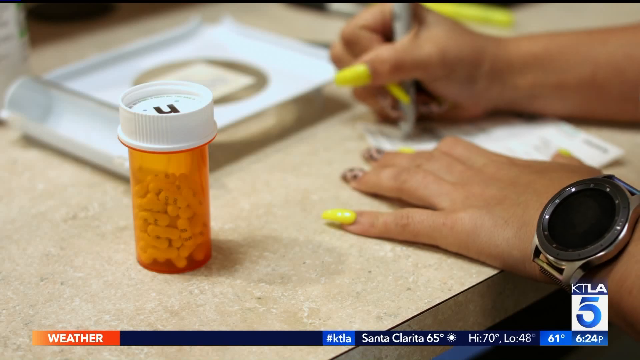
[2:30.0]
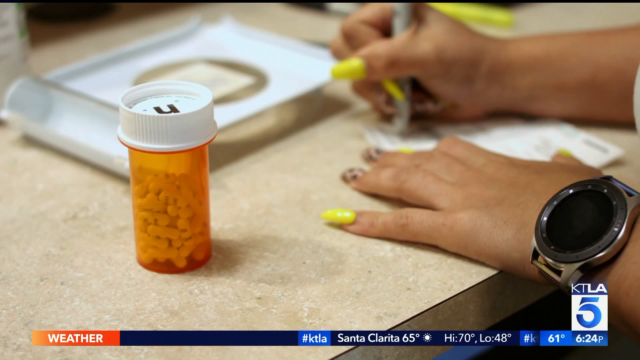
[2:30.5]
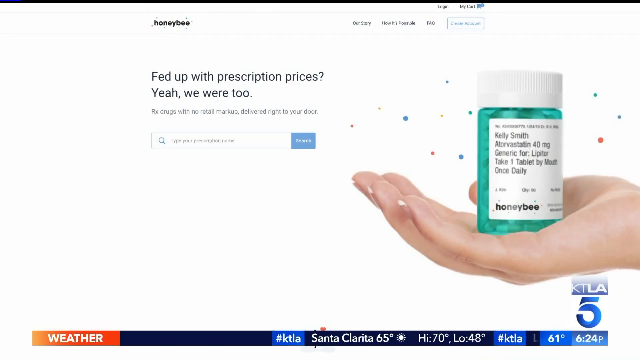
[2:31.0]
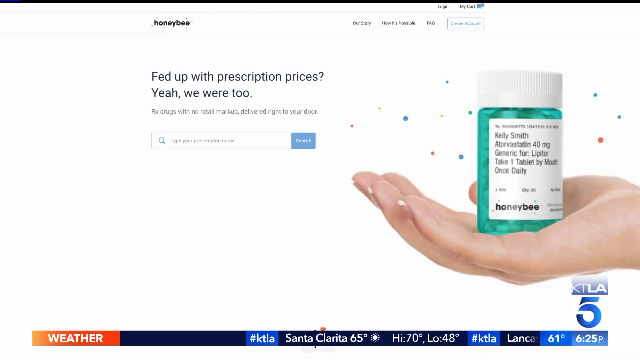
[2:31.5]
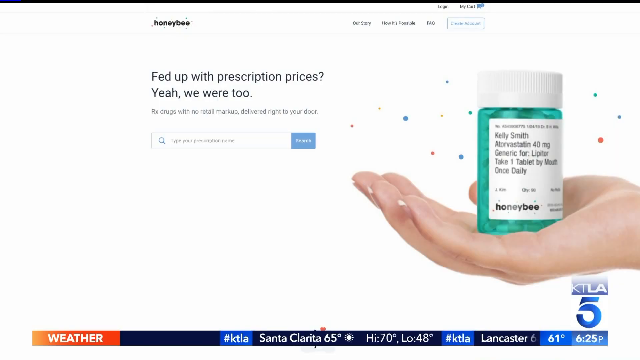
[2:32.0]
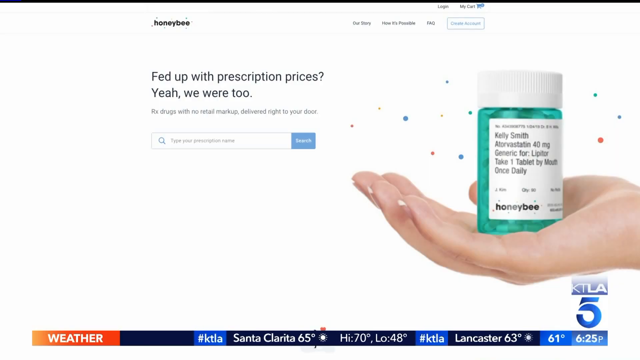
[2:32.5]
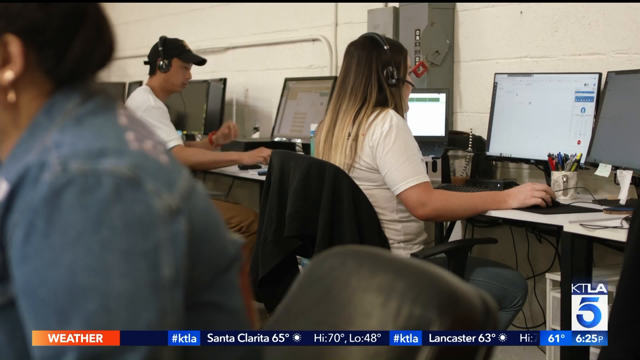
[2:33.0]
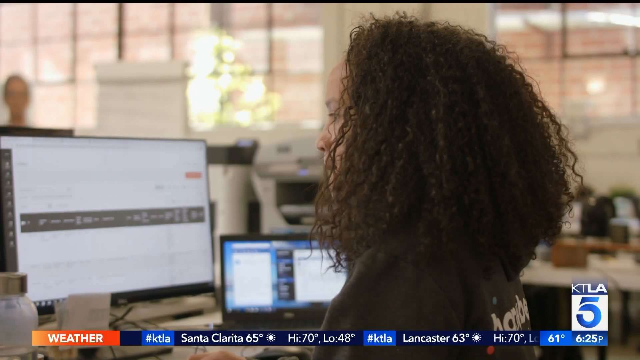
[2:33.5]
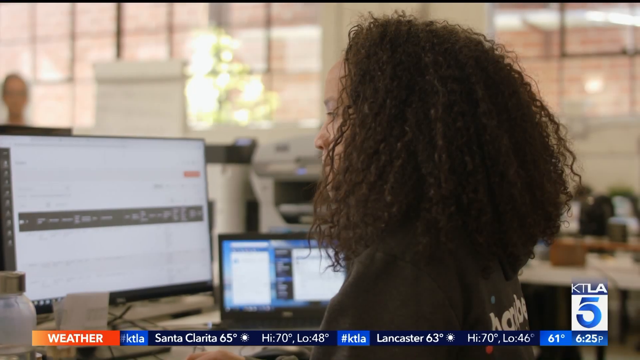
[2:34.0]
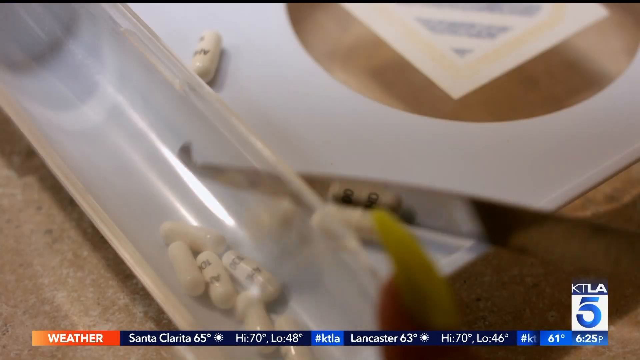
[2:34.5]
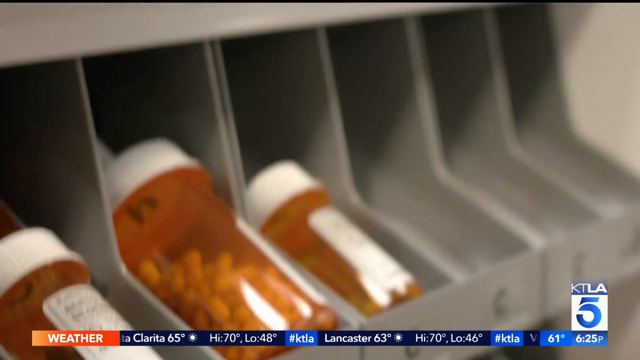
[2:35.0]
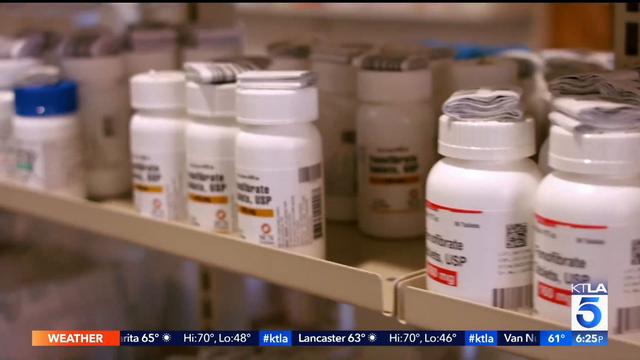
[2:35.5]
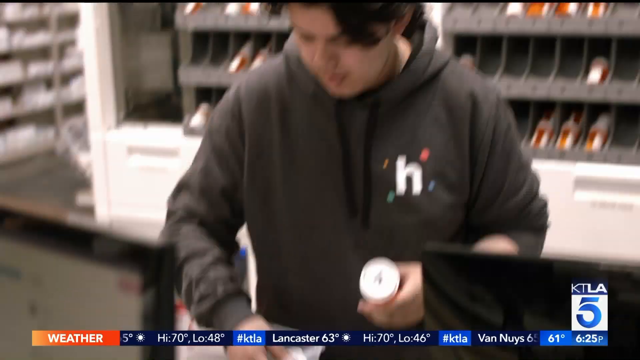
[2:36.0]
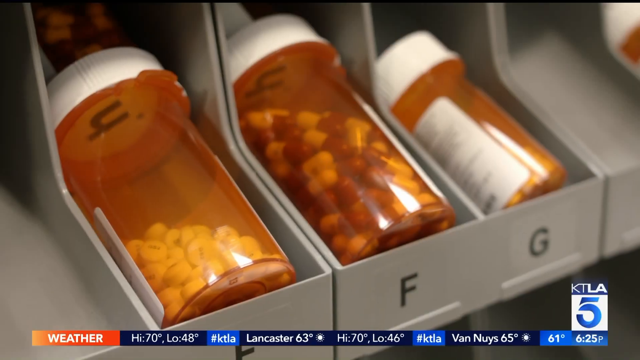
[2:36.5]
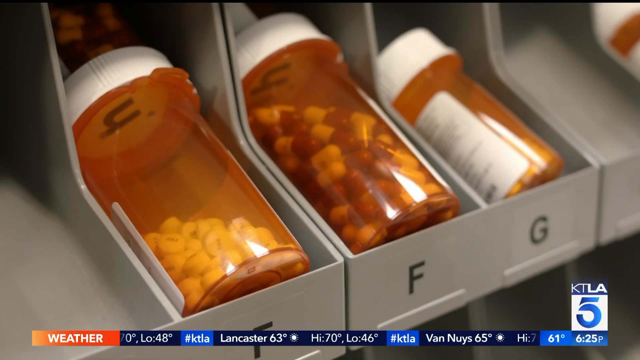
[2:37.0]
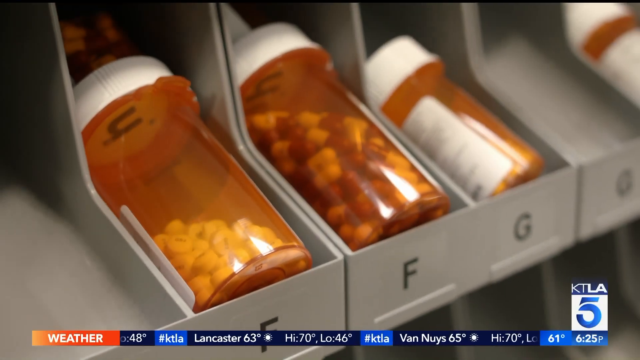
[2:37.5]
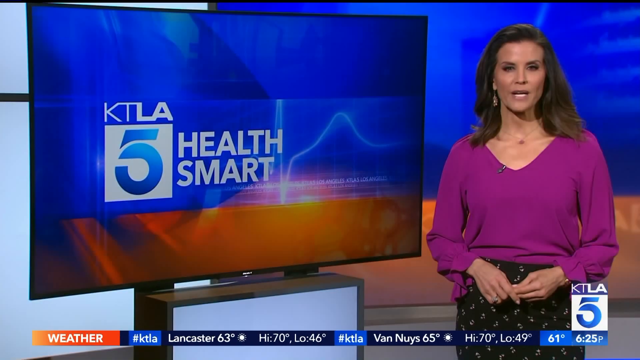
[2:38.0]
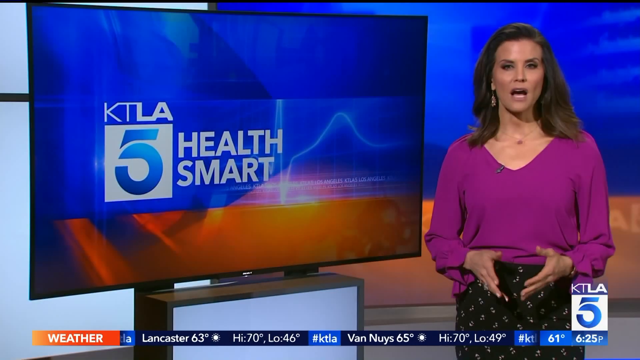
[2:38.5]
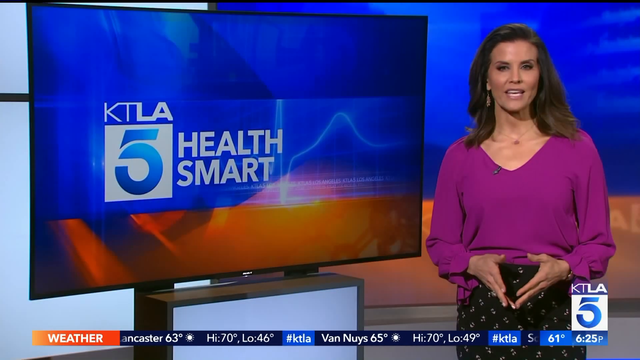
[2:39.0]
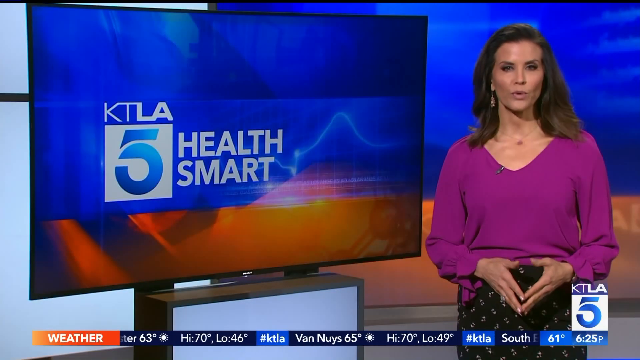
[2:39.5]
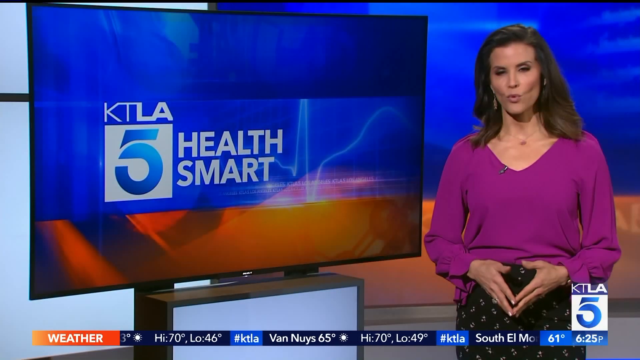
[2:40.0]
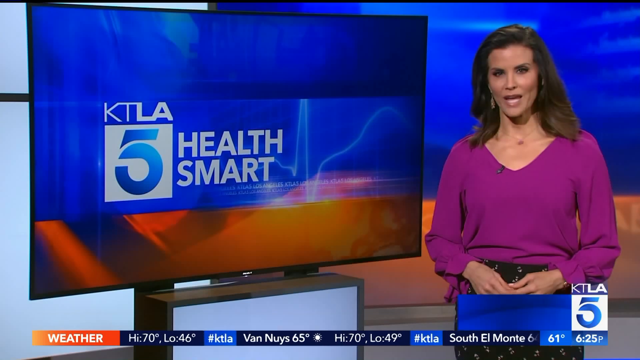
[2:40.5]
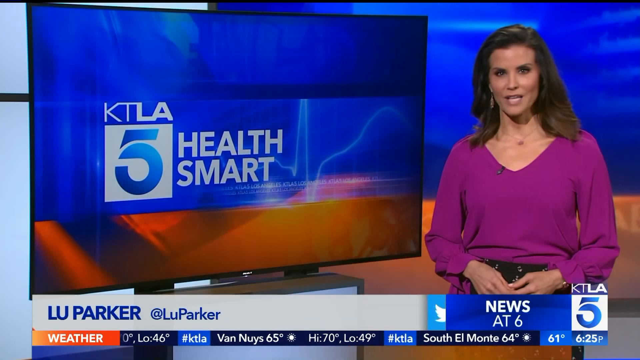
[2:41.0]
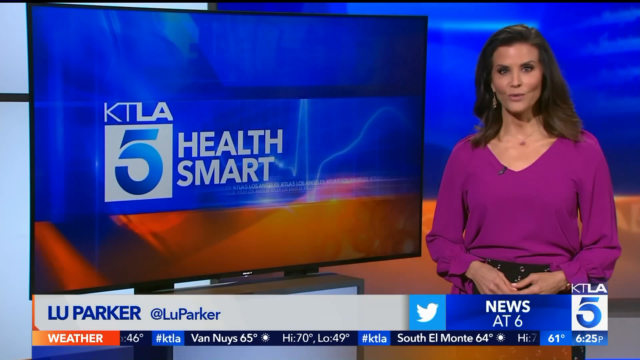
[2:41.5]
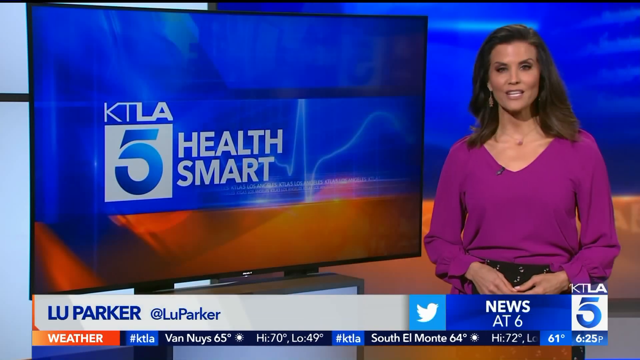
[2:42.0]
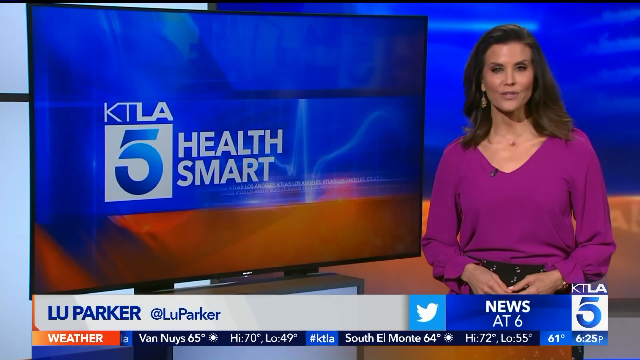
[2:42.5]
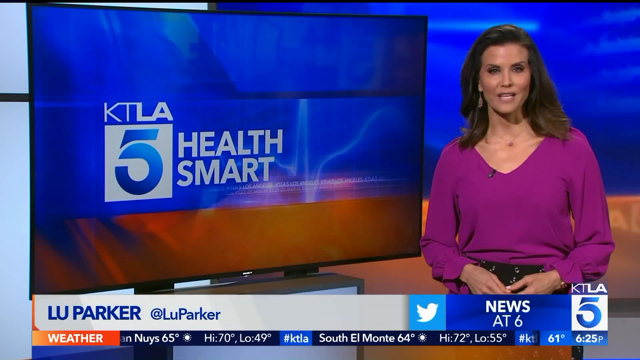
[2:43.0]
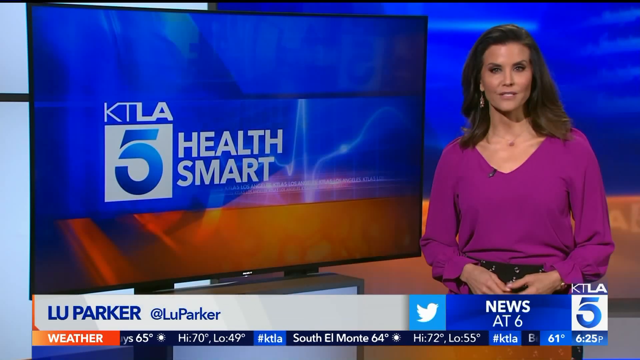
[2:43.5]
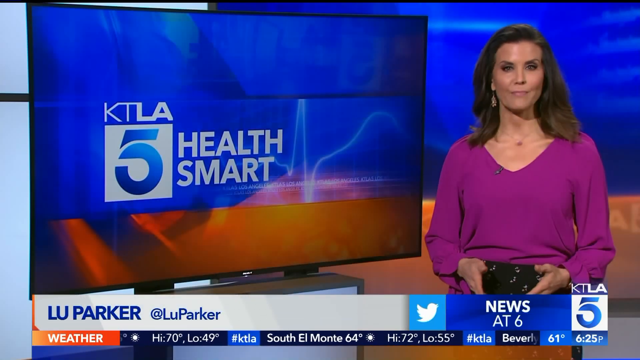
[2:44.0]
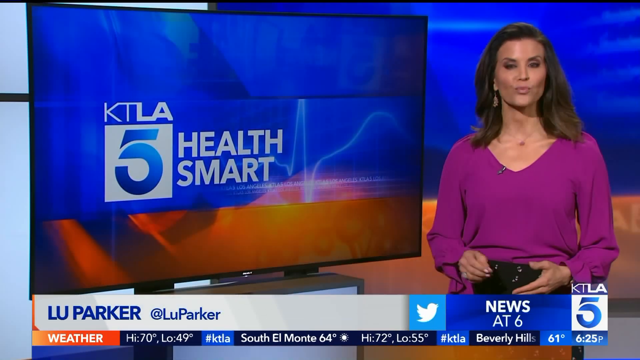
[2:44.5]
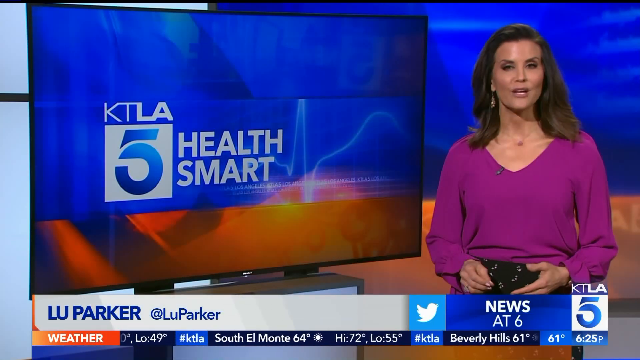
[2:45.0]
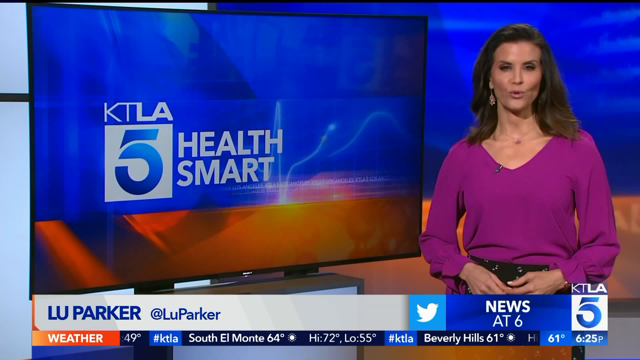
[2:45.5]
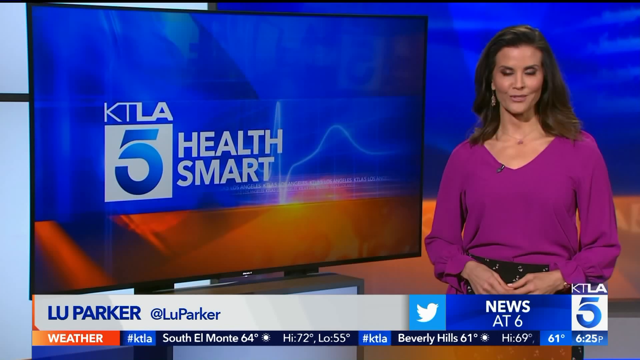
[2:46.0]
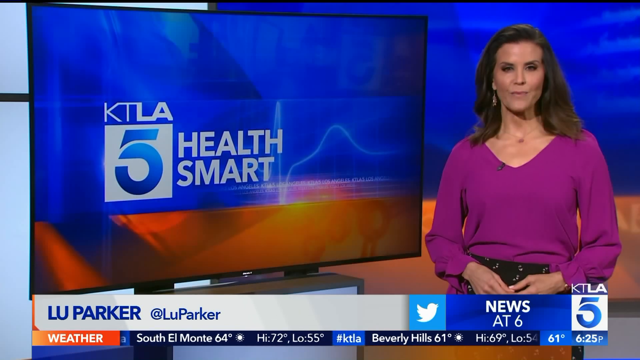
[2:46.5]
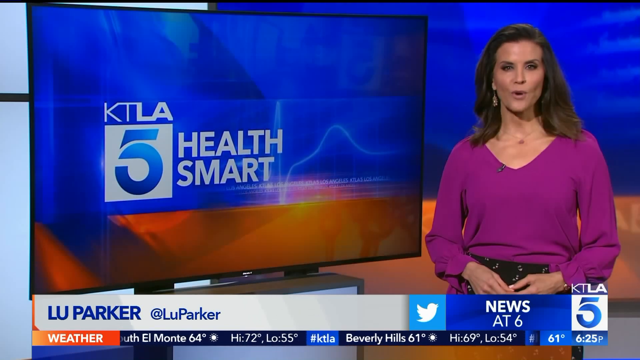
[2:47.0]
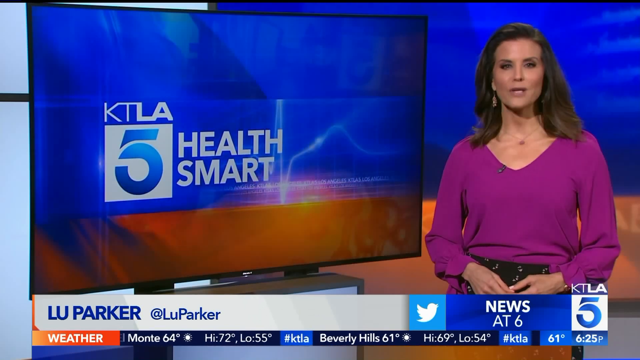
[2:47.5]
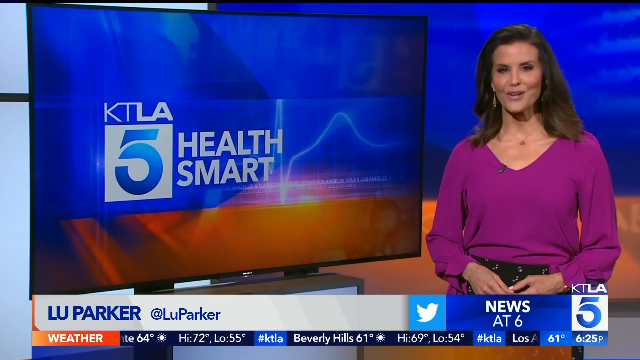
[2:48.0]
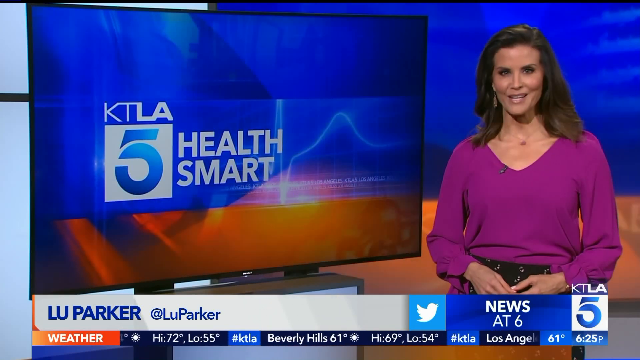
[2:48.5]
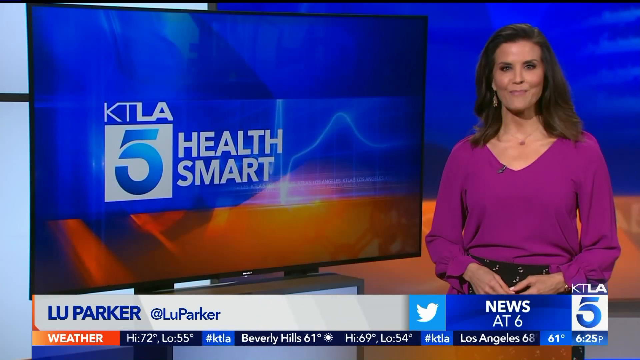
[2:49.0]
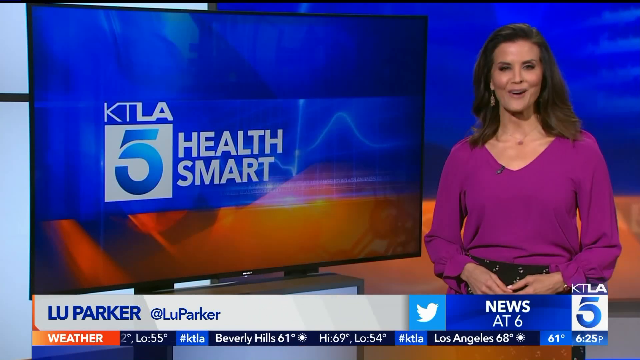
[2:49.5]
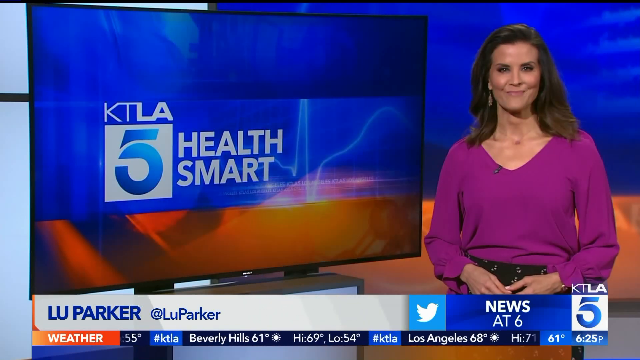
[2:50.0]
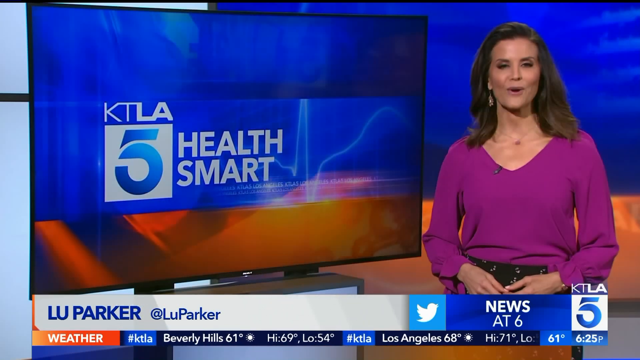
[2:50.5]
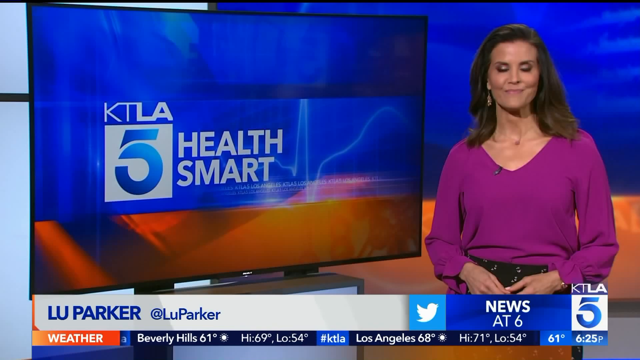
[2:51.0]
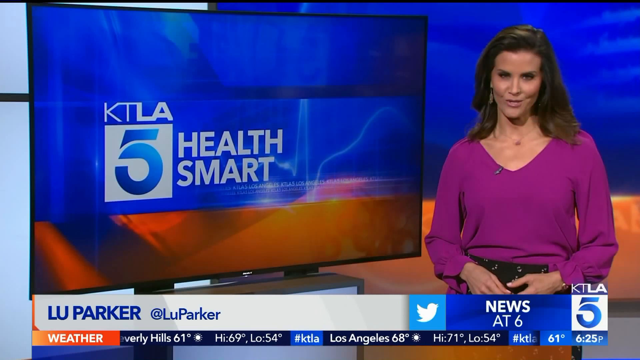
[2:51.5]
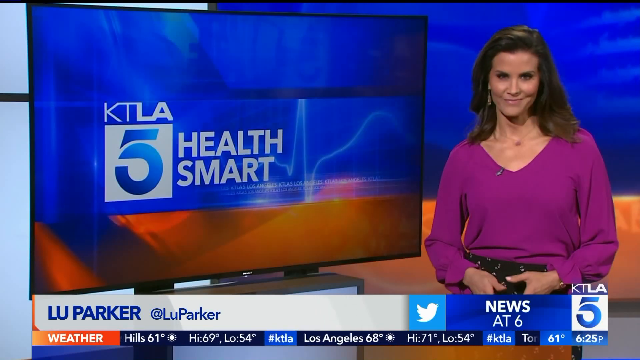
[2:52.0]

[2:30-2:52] A woman with neon yellow nails and a smartwatch on her wrist writes on a piece of paper on a desk. A screenshot of the Honey Bee website follows: an all-white background with the Honey Bee logo at the top left, log-in and cart options at the top right, buttons for "our story", "how it's possible" and "FAQs", and a search bar for prescriptions. Several images of the call center follow, then more of the pharmacy, the alphabetized pill bottles, and people sorting and counting pill bottles. The video returns to the news station, where a previously unseen anchor in a long-sleeve purple shirt stands in front of a green screen with her hands folded in front of her waist, gesturing a little as she talks. She has shoulder-length dark brown hair, heavy makeup and dangling earrings, and wears black slacks that might have a slight design, hard to see beyond the footer.